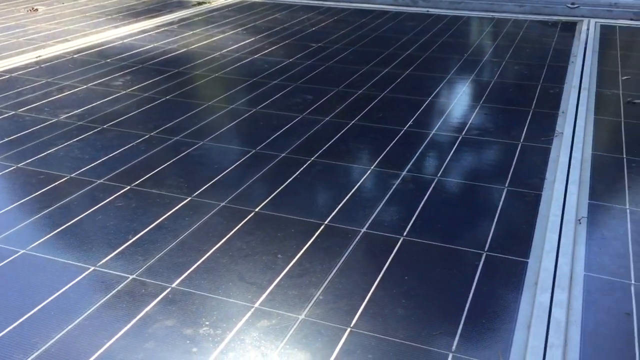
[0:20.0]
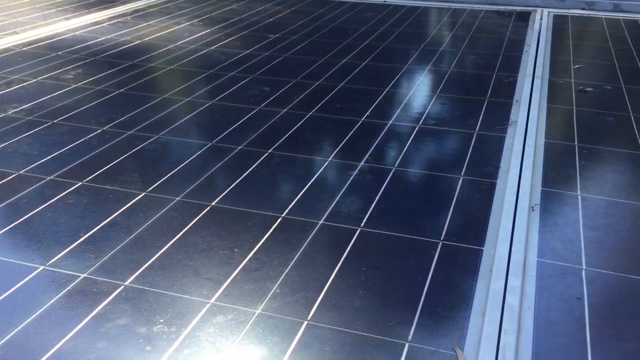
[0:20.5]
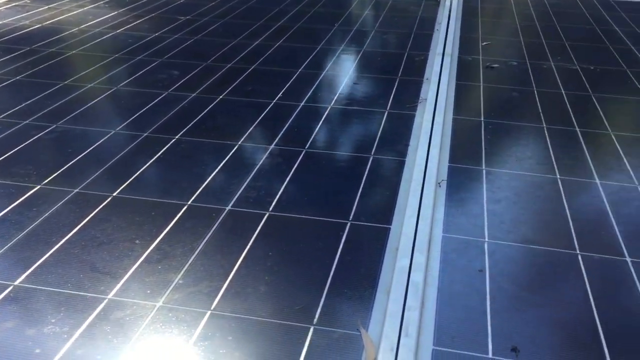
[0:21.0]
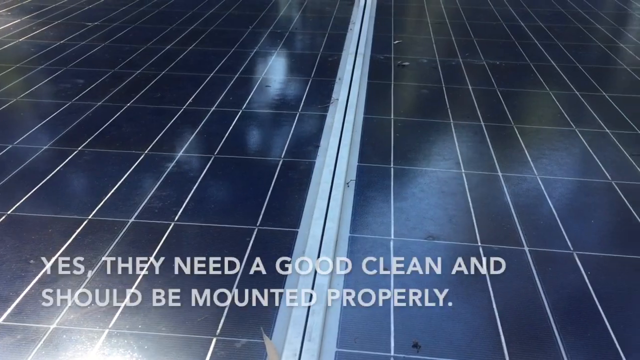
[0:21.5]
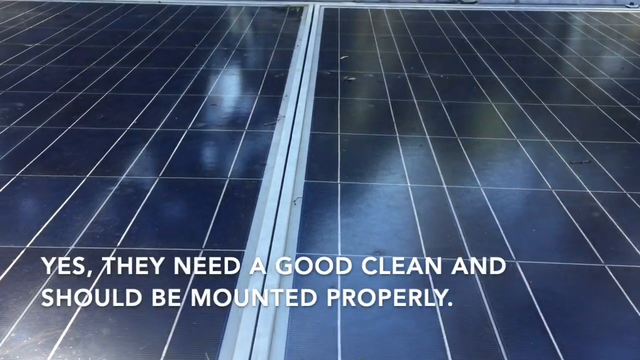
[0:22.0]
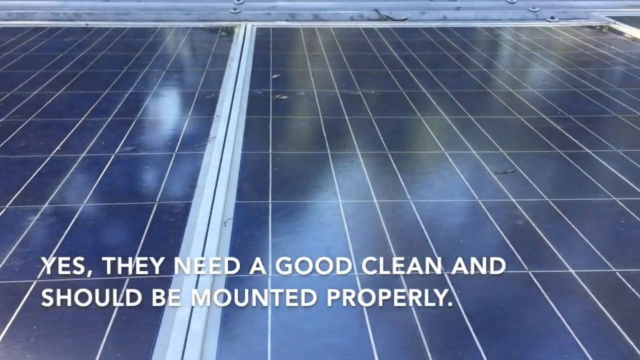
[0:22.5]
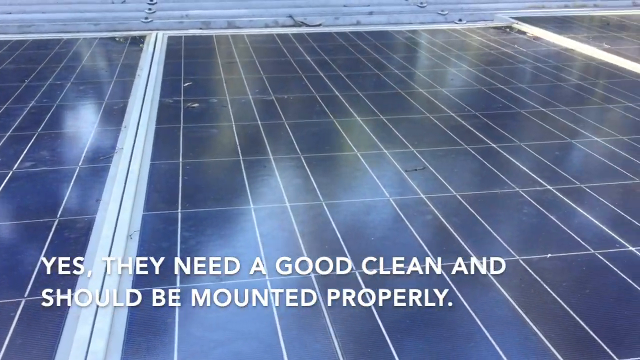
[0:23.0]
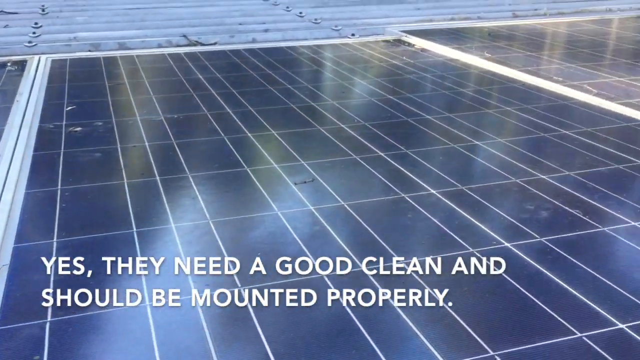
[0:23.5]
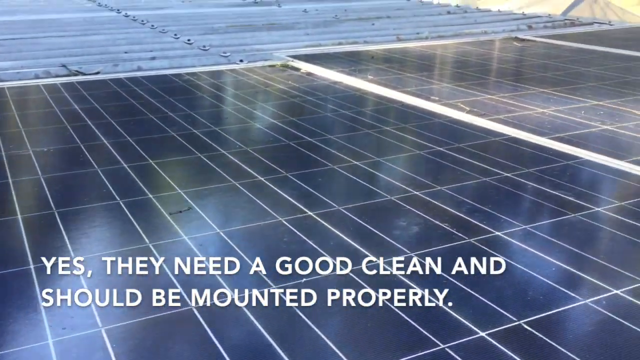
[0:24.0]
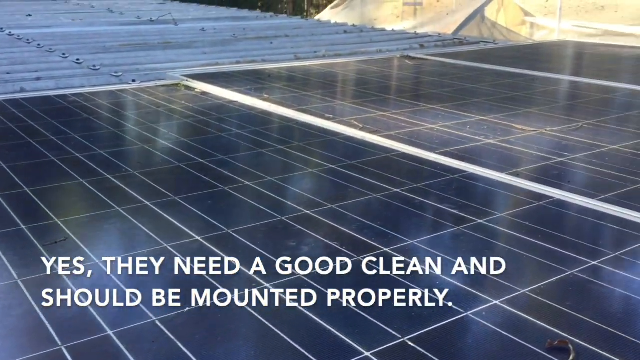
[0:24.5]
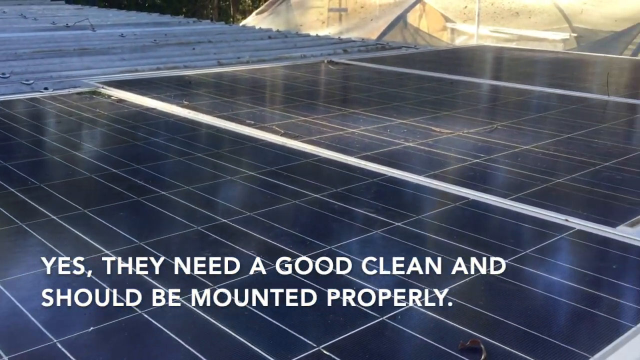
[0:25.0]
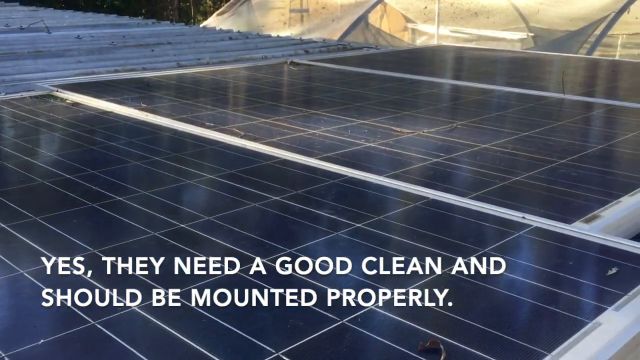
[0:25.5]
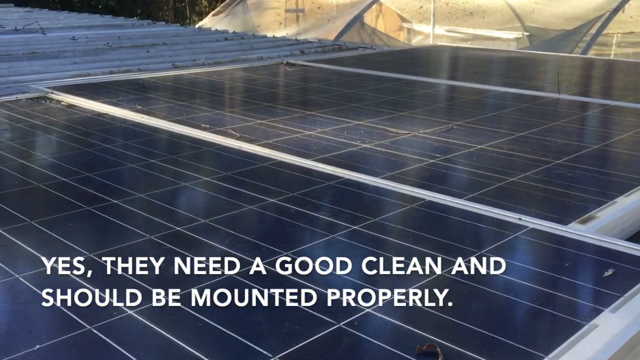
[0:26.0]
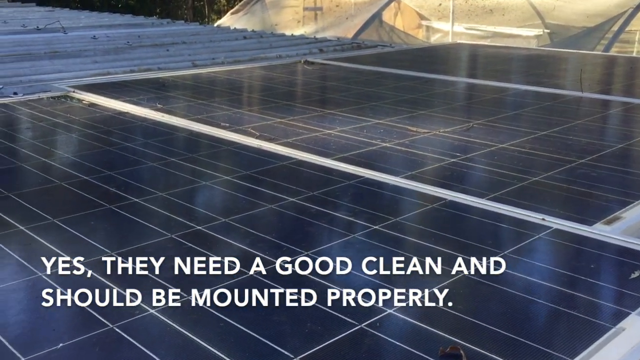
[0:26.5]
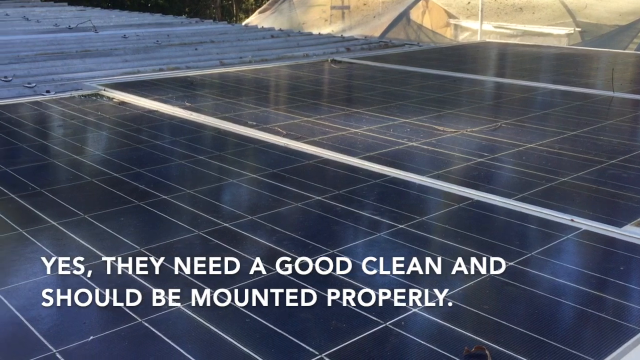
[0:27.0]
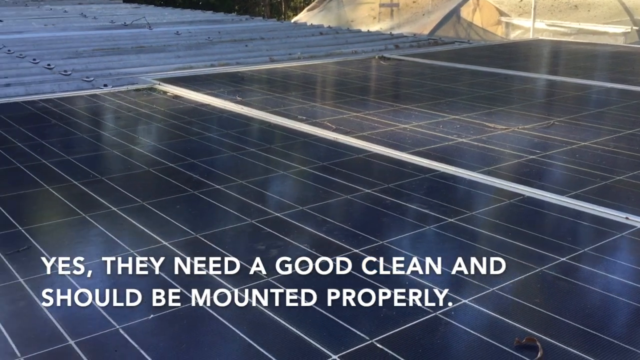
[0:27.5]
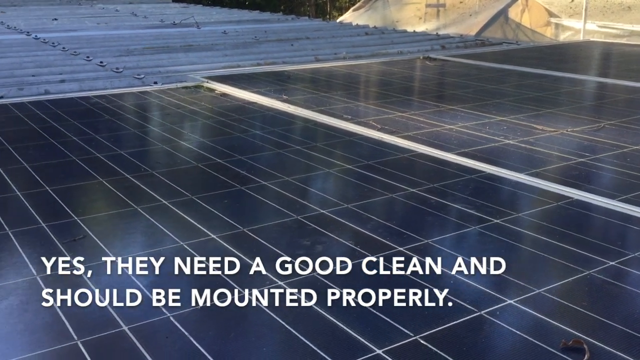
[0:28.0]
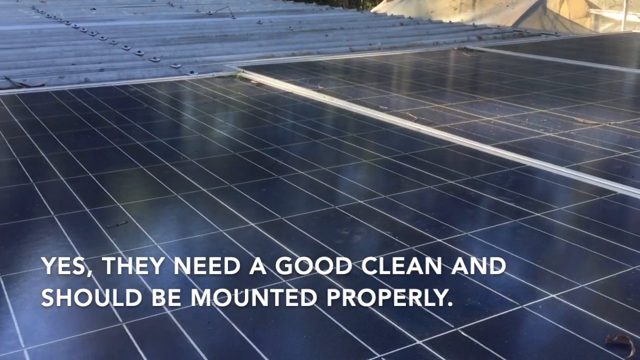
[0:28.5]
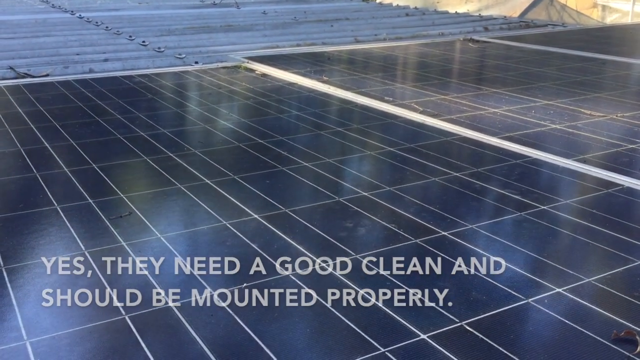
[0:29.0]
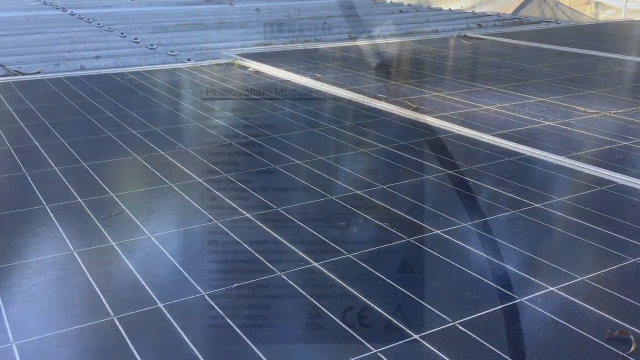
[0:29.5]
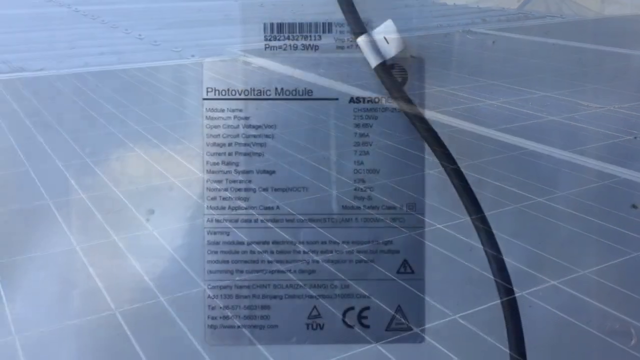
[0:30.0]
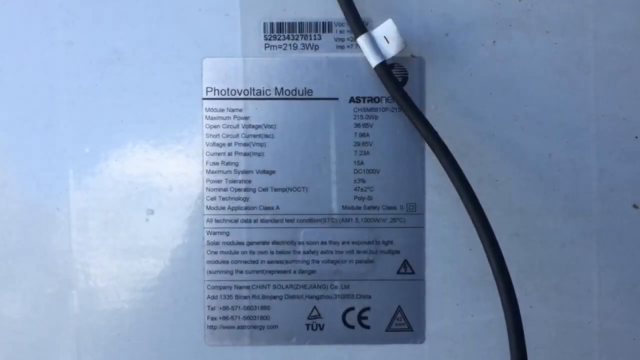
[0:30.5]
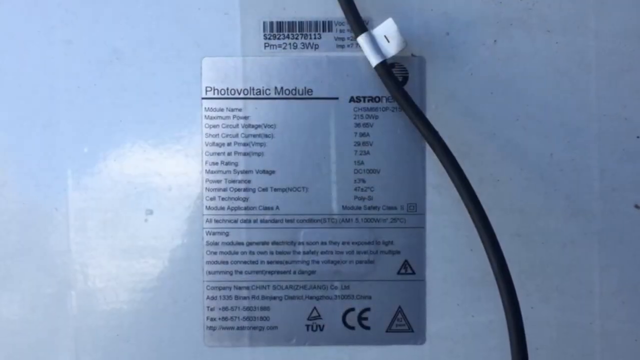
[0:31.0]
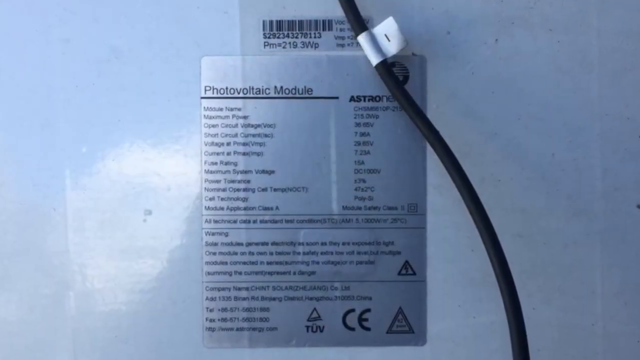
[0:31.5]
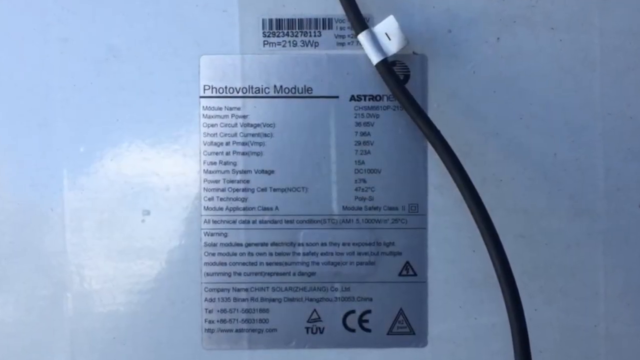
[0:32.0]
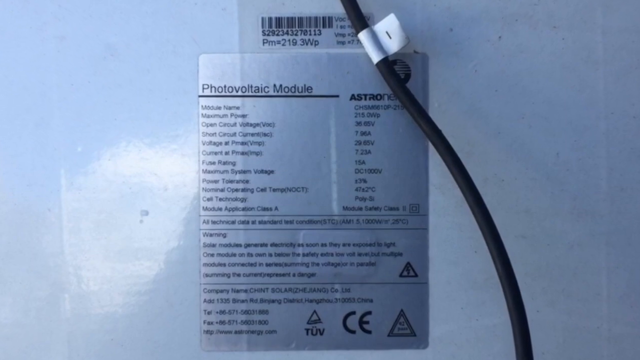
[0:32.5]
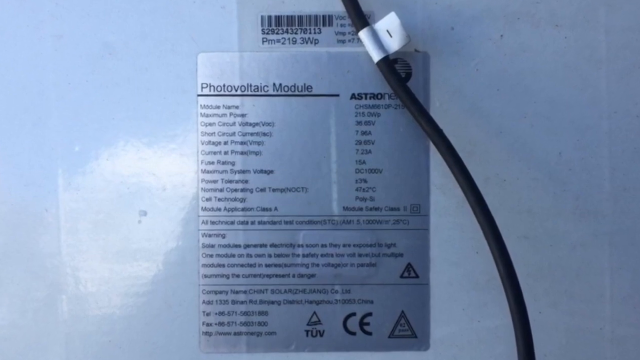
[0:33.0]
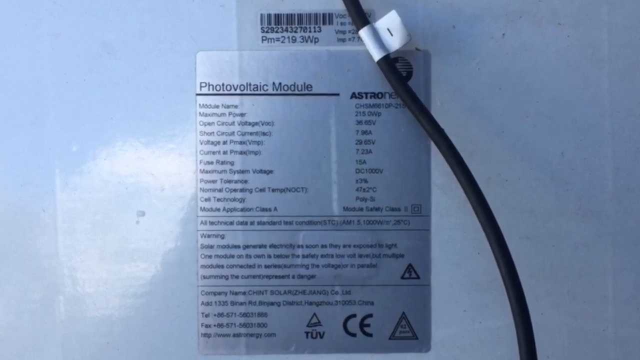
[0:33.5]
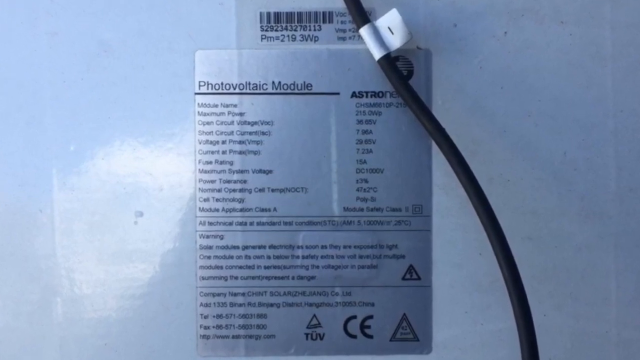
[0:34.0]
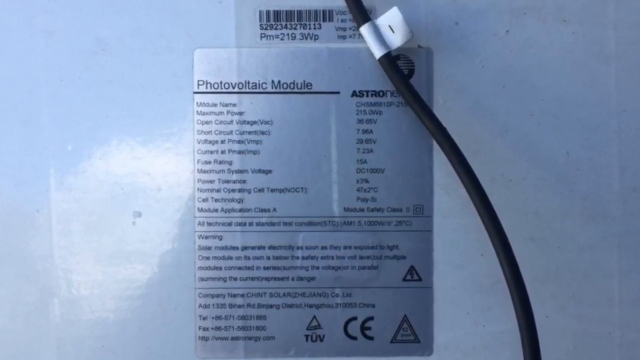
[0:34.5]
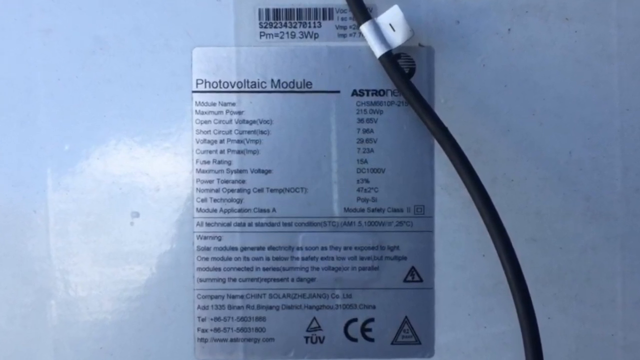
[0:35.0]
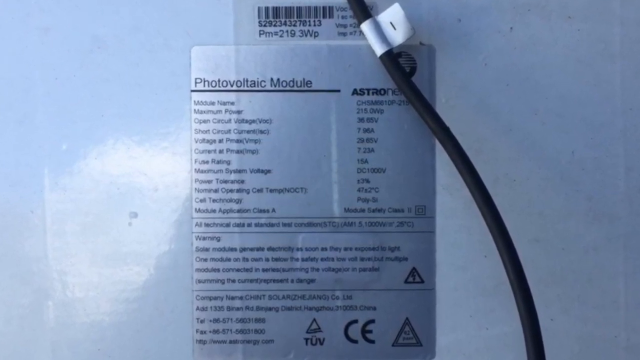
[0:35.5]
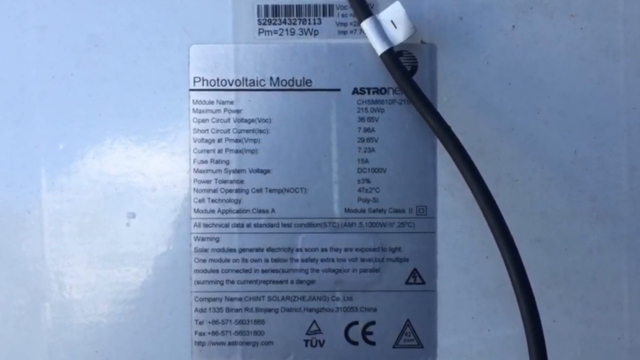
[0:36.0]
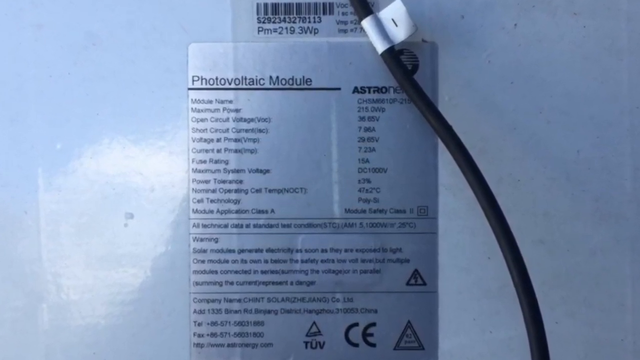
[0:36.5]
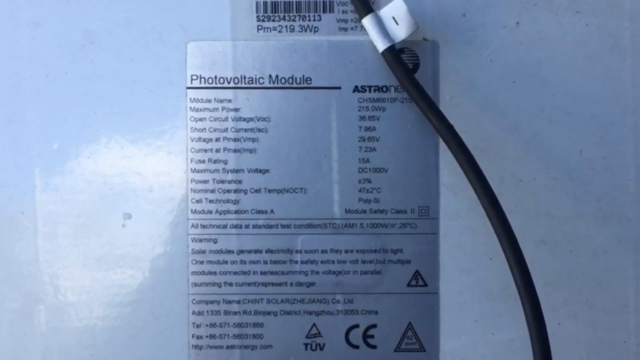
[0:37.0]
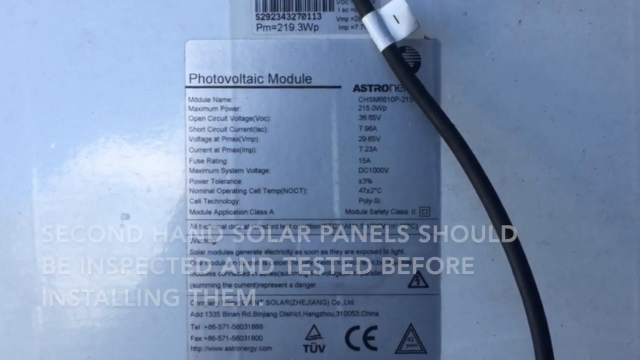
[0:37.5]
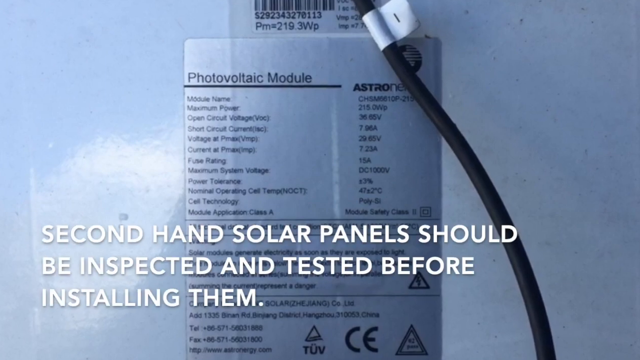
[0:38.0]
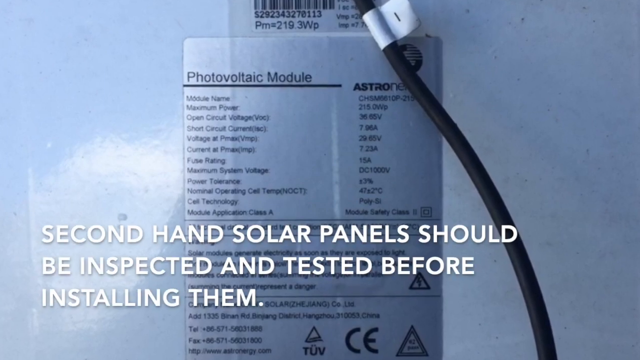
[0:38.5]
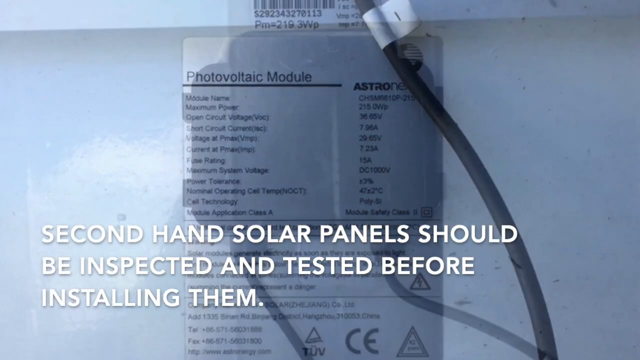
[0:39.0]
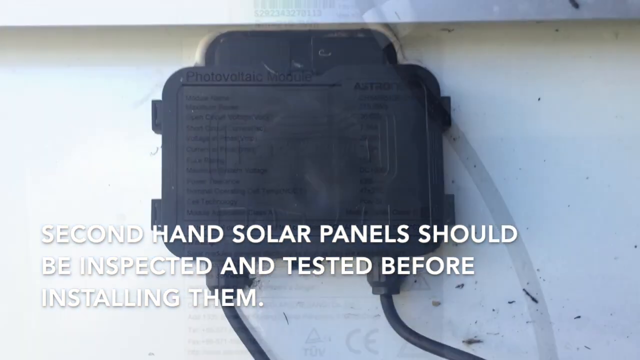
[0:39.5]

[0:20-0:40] The solar panels are viewed as if from someone standing above them, looking at them. They are lined up one after another, connected by what looks like white aluminum framing around each panel. Within each panel are tiny frames or divisions separated by what looks like white. The camera pans off to the right, moving along to show the distance of the panels and a bit of greenery, revealing that the view is apparently from a roof looking downward. Bold white text suddenly pops up at the bottom of the screen: "yes, they need a good clean and should be mounted properly". The scene then changes to a white wall indoors, where a panel attached to the wall reads "Photovoltaic Module" in black text, with a black cord in front of it.